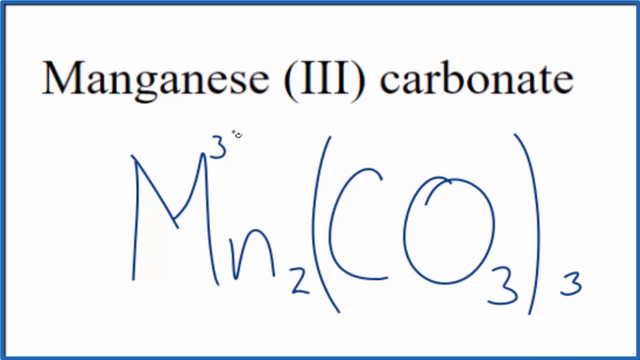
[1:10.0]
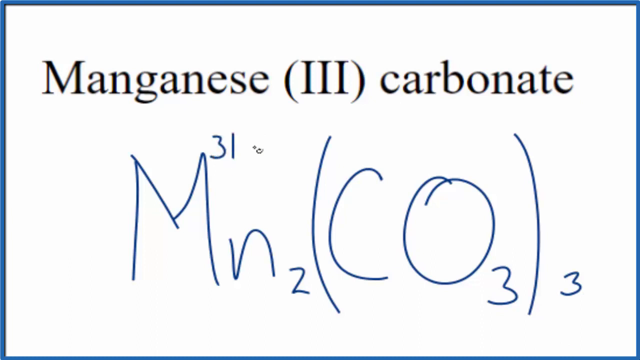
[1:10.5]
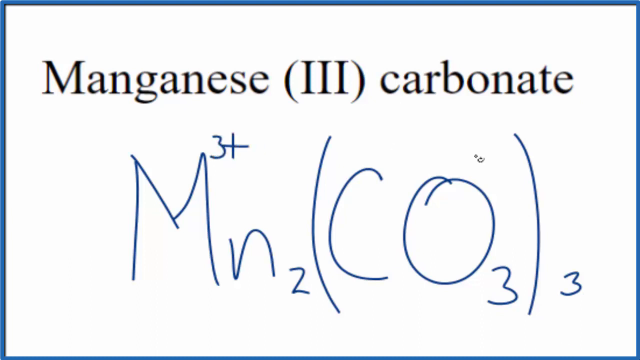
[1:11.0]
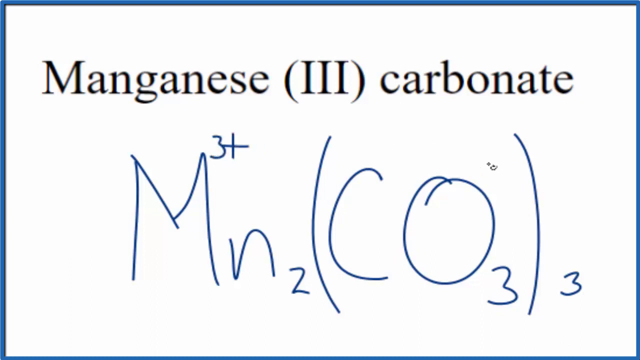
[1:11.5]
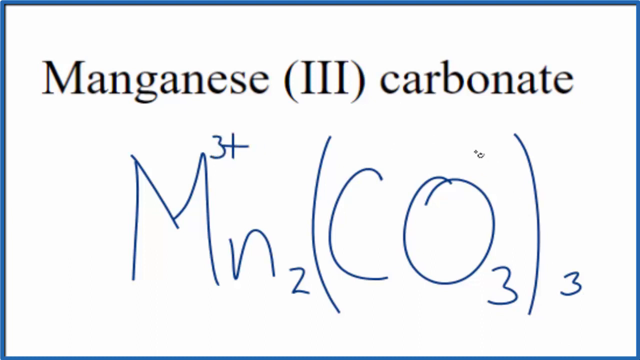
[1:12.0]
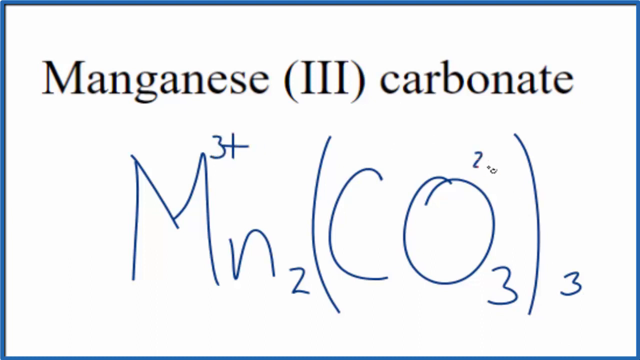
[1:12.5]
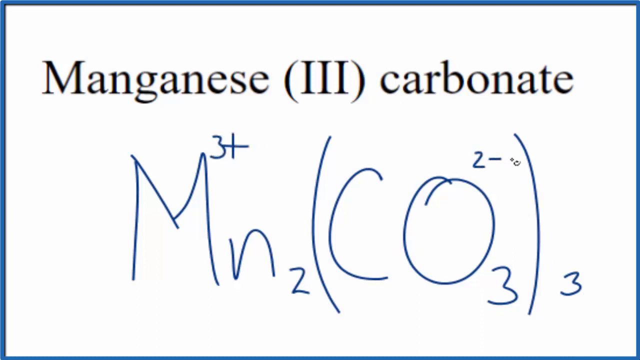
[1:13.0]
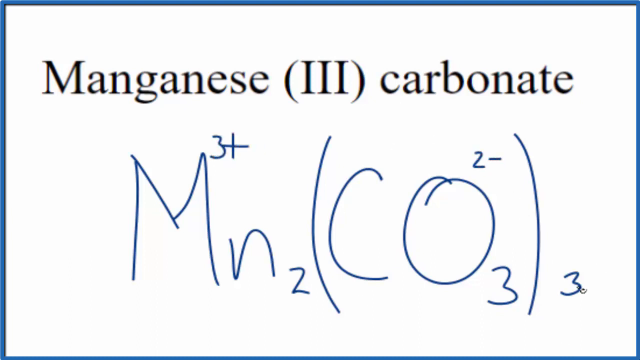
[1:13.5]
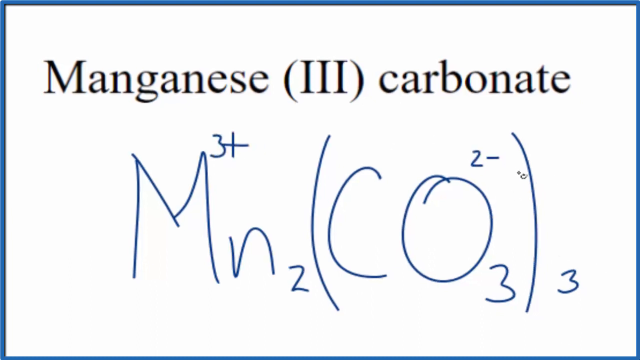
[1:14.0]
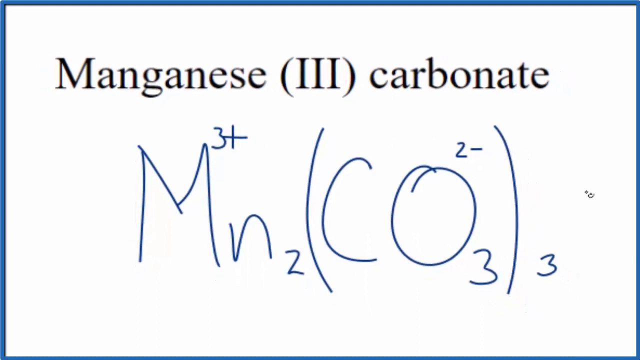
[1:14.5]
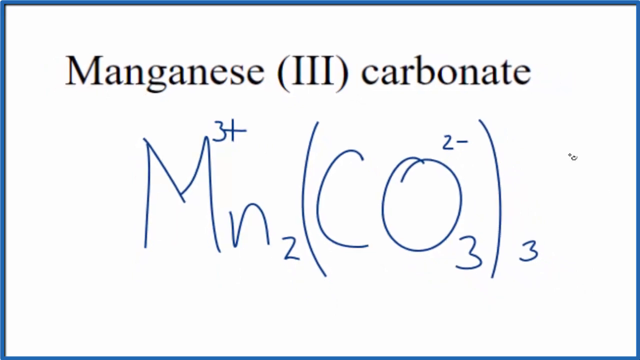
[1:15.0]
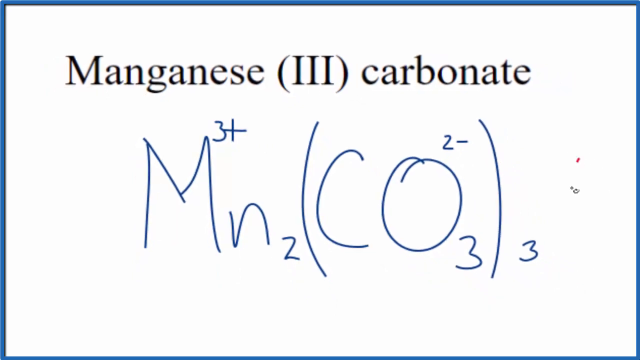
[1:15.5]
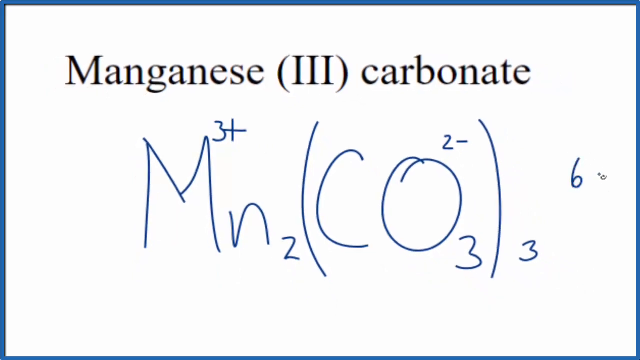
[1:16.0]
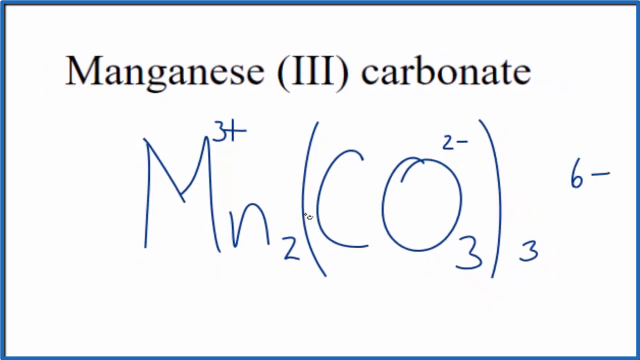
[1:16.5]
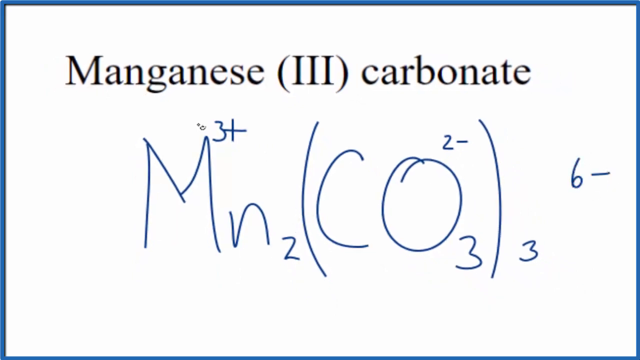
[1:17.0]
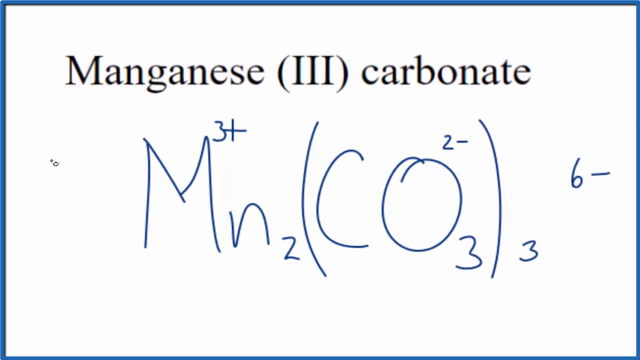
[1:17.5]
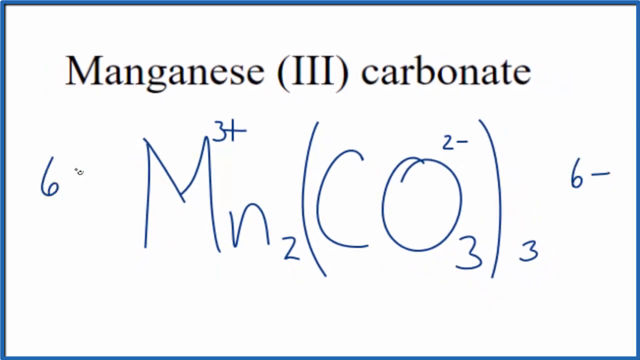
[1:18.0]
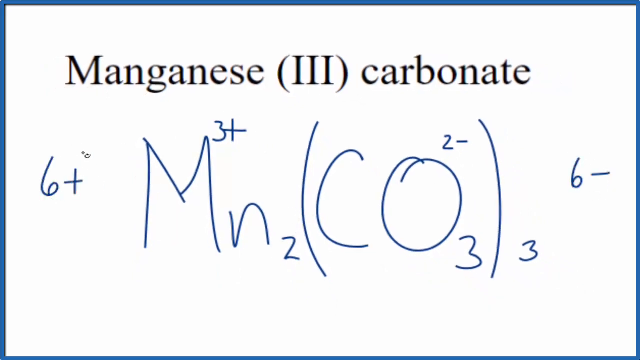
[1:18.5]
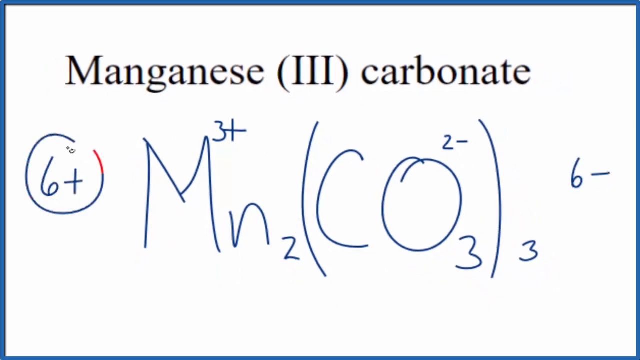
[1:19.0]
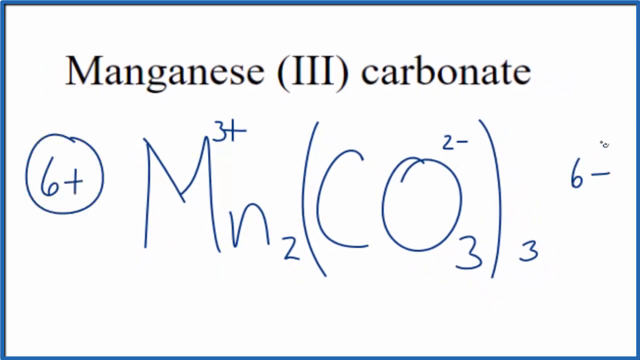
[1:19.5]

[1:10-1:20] An M has just been drawn next to the 3, along with a plus sign. Inside the parentheses, with the C O and the 3 at the bottom, a 2 is drawn on top of the O, followed by a negative sign. The view seems to zoom out, and "6-" is written above the little 3 outside the parentheses, in the middle. The mouse moves back to the beginning where the M is and writes "6+". The 6+ is circled, and then the 6- is circled.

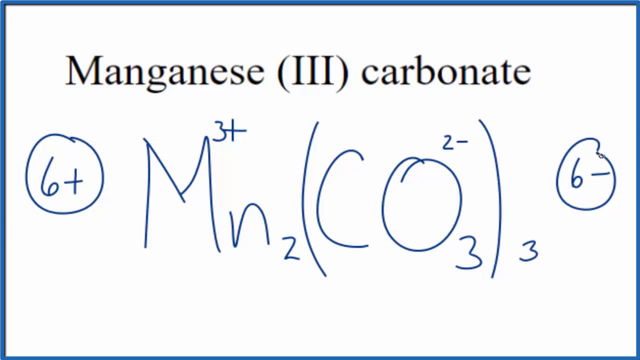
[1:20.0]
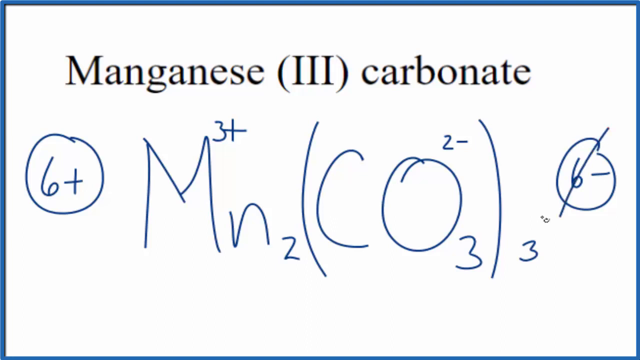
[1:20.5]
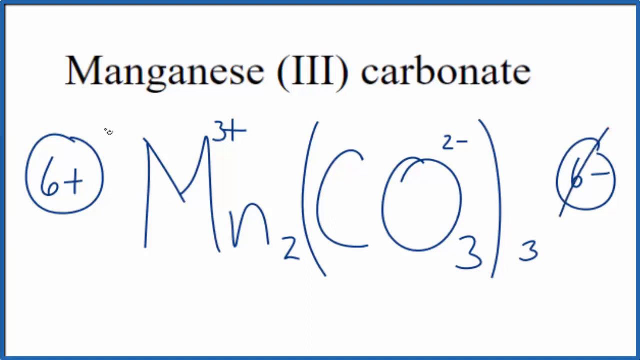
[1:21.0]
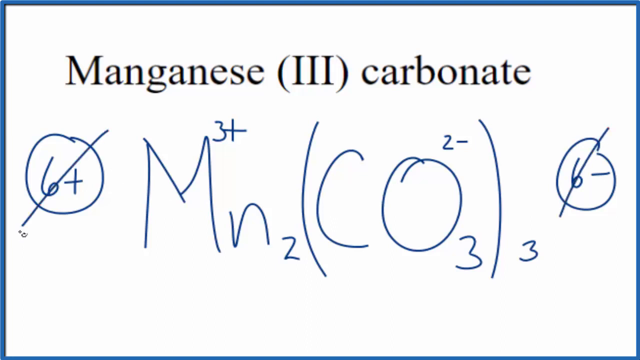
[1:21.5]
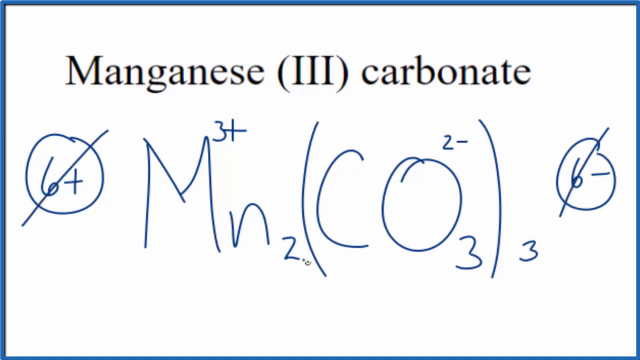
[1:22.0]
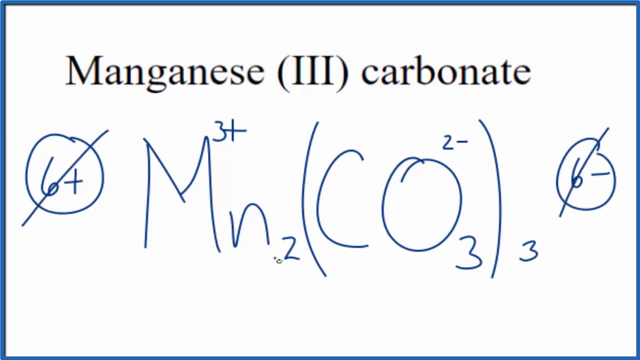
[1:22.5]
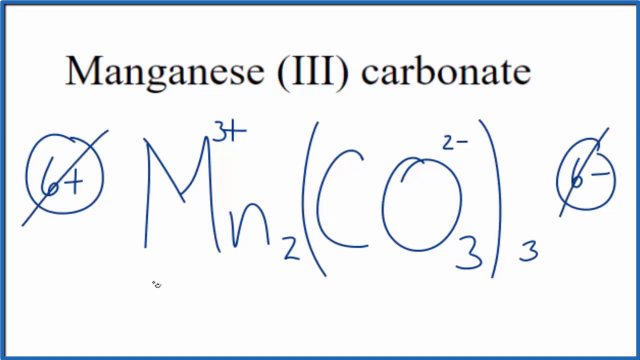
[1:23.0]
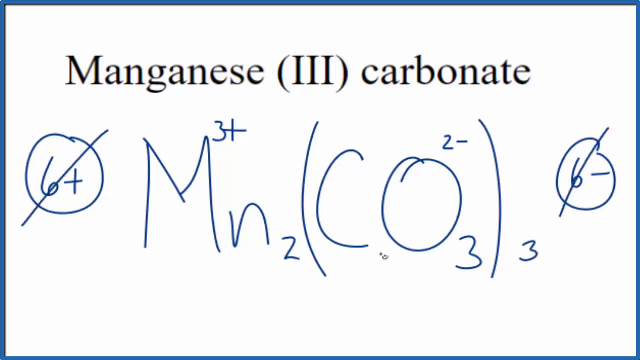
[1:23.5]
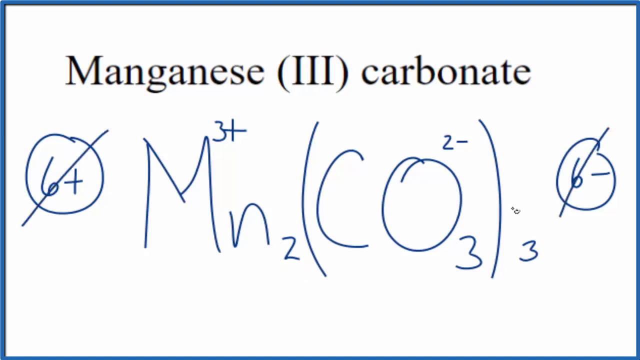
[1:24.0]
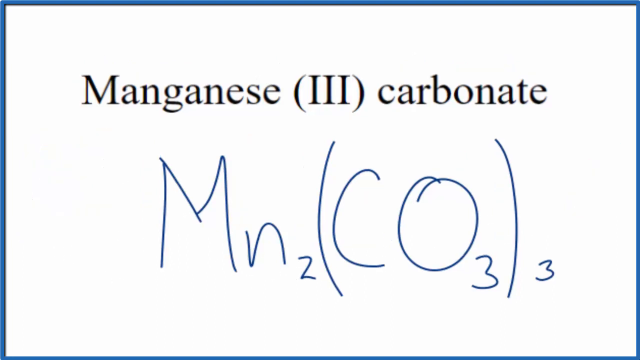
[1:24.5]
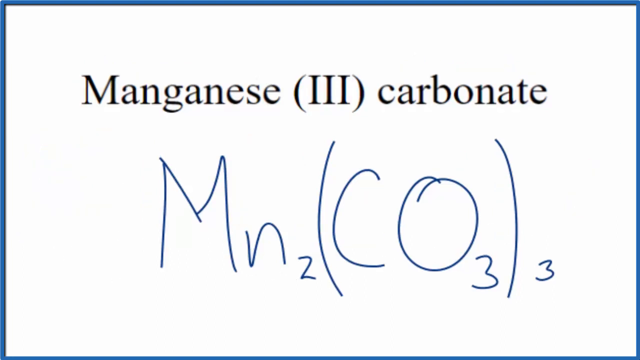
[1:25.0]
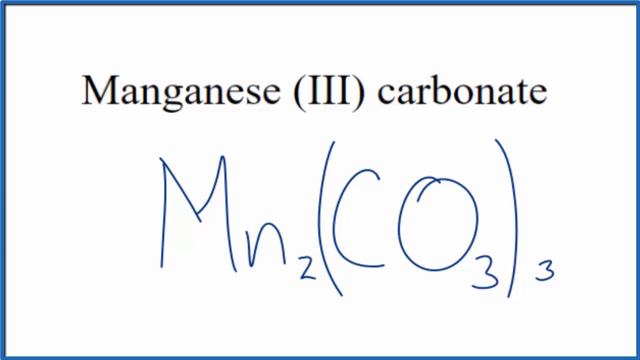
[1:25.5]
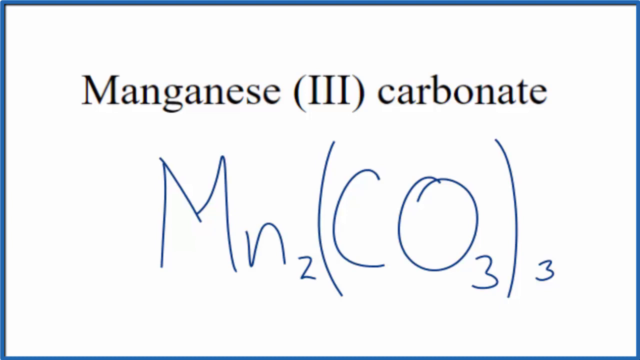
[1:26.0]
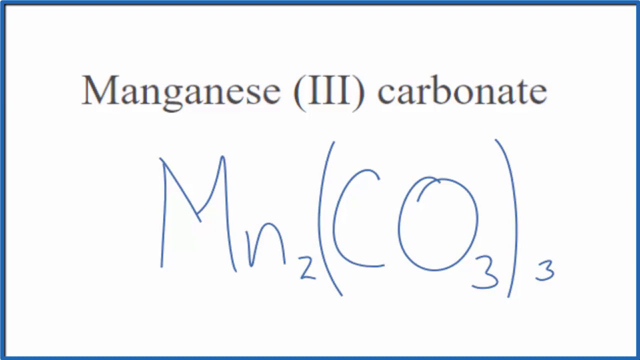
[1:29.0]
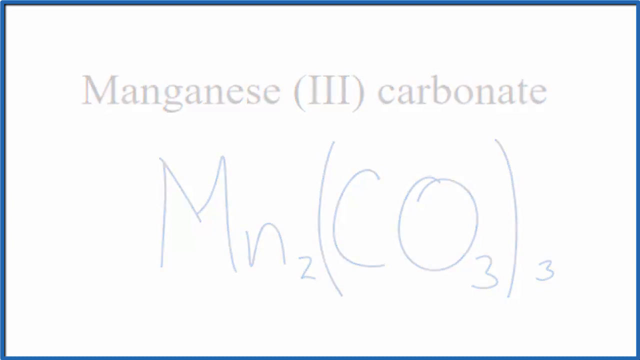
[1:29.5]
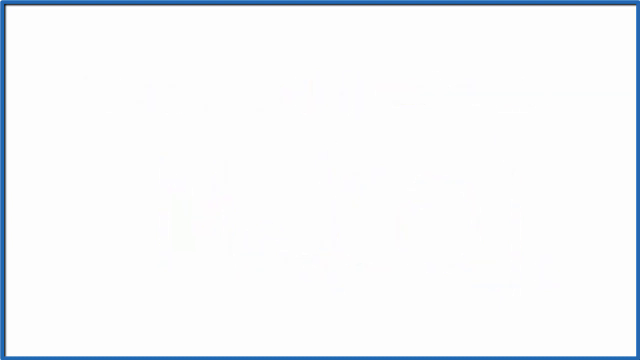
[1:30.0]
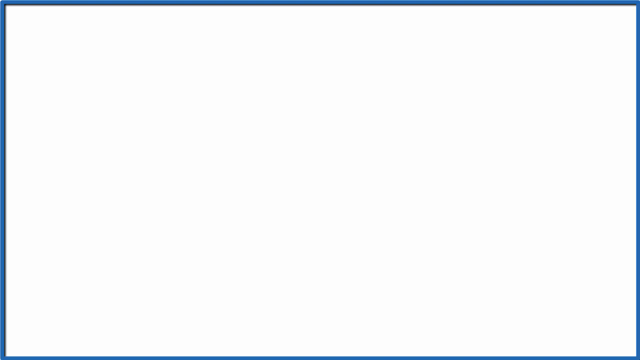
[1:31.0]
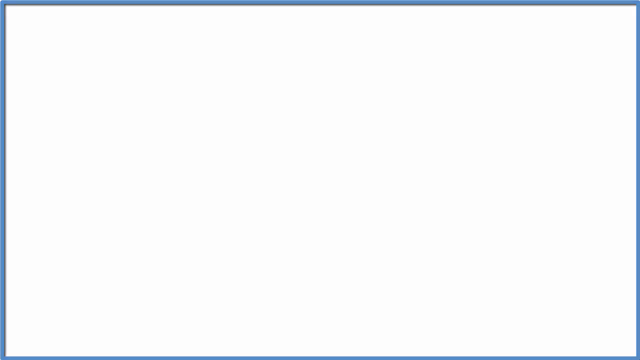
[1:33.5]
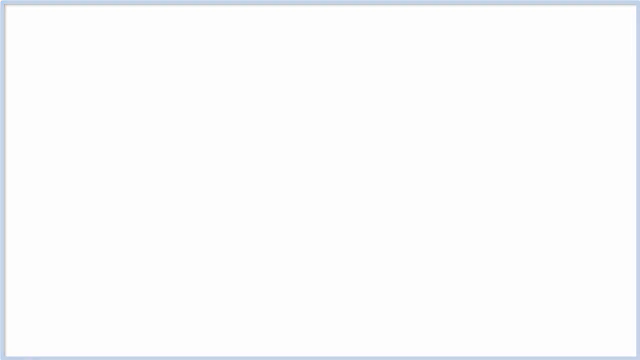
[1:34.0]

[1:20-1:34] Lines are drawn through the 6- and the 6+, and the mouse pointer moves all over the screen. The screen then seems to cut to a formula: uppercase M, lowercase n, a 2, a parenthesis, capital C, capital O, a little 3, a parenthesis, and a little 3. It stays on that screen for about seven seconds, then the screen goes completely white and stays white for about the last two seconds. The original formula is written in what looks like light blue ink.